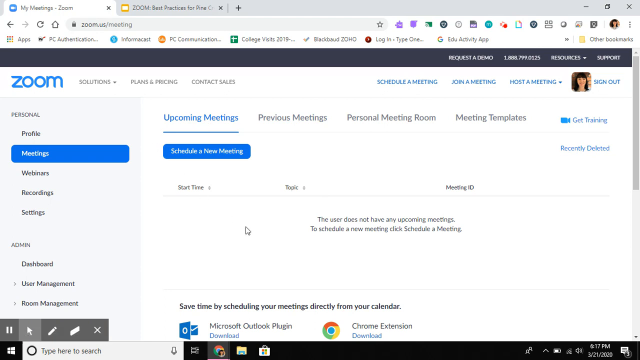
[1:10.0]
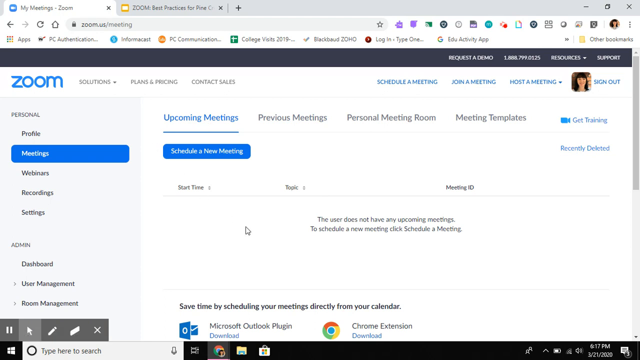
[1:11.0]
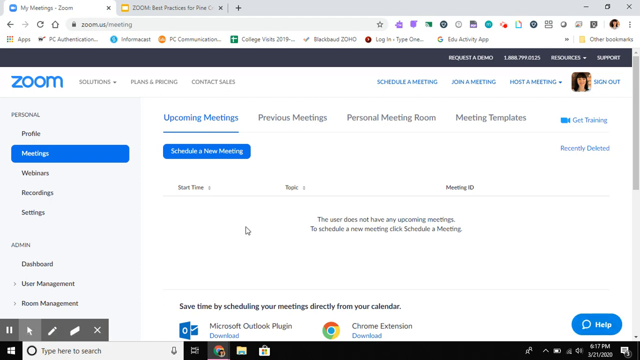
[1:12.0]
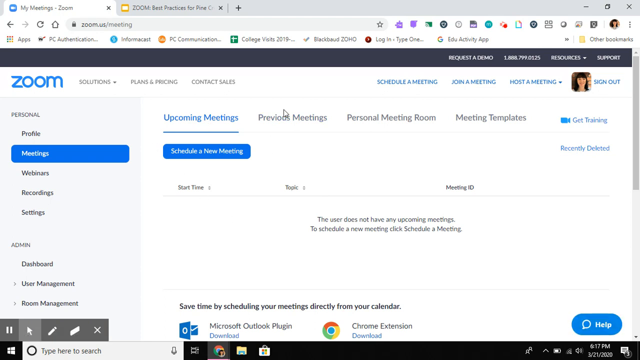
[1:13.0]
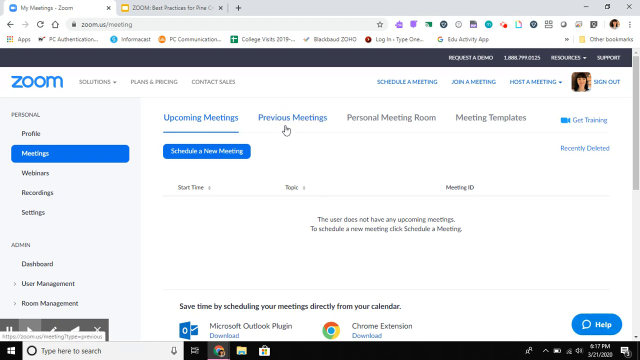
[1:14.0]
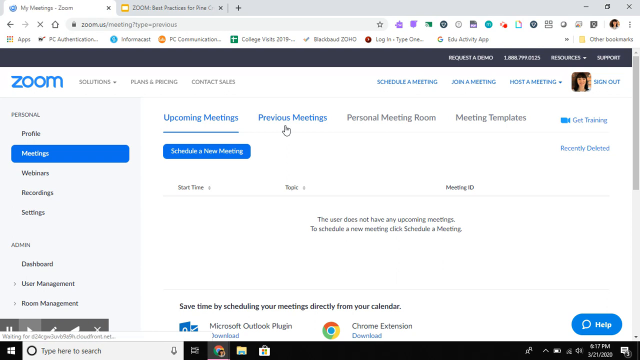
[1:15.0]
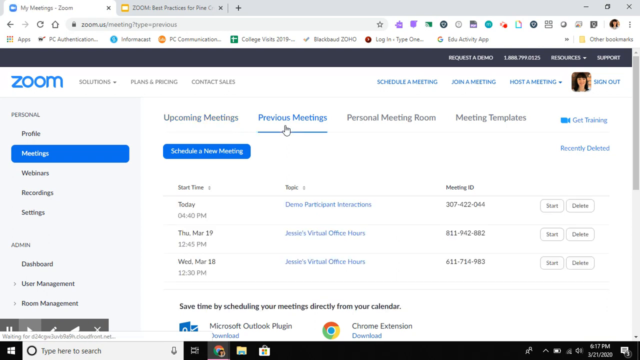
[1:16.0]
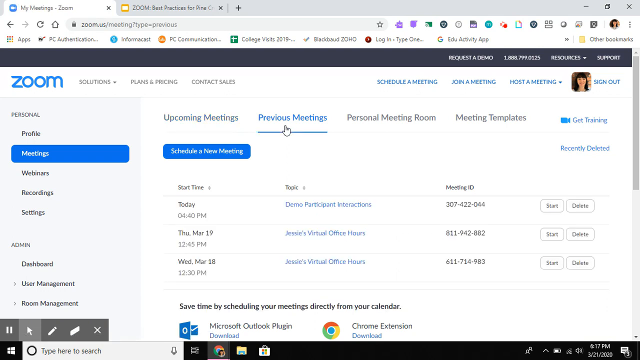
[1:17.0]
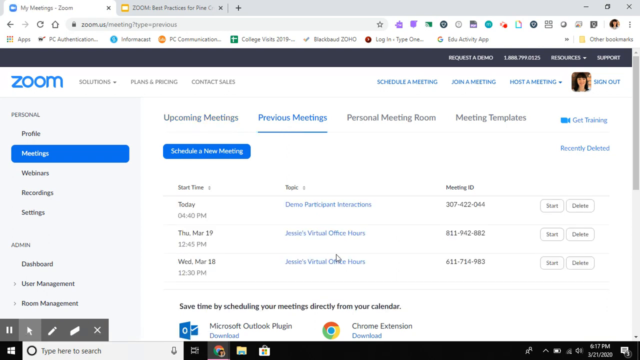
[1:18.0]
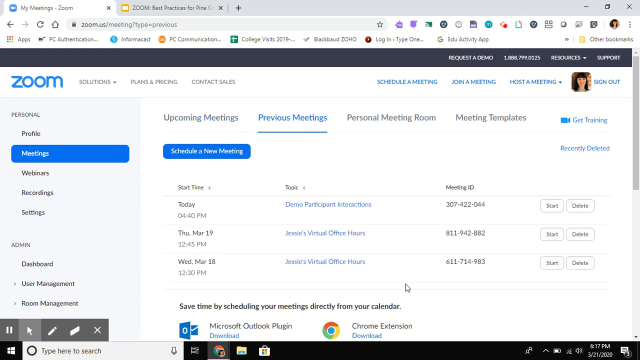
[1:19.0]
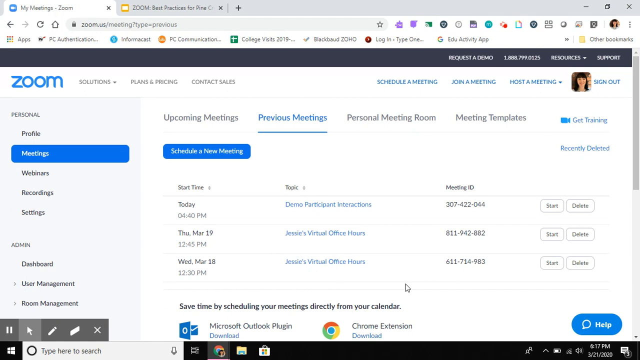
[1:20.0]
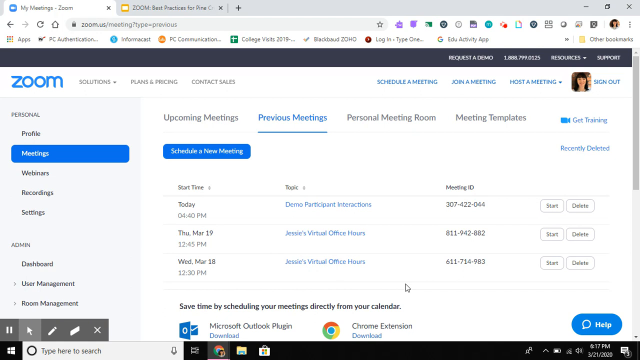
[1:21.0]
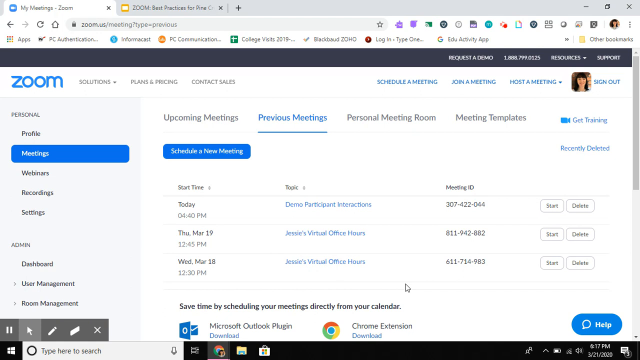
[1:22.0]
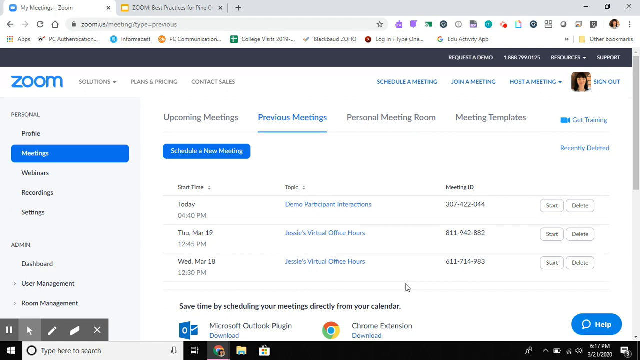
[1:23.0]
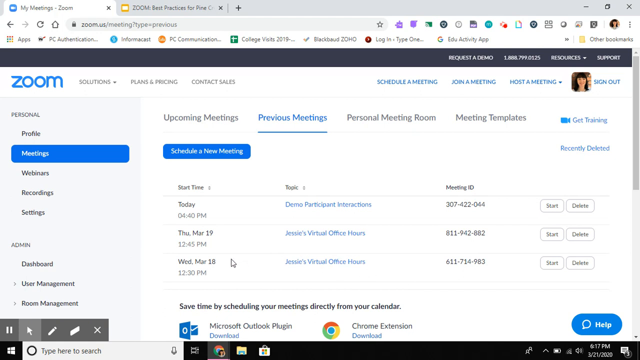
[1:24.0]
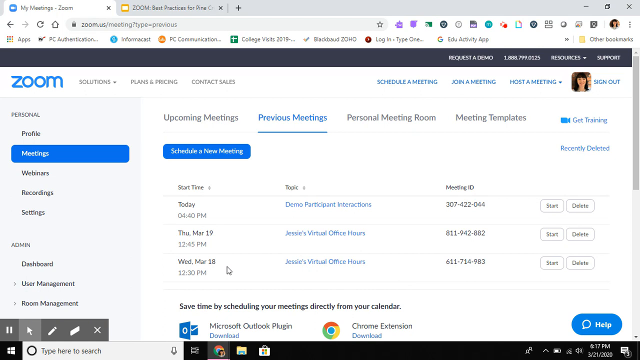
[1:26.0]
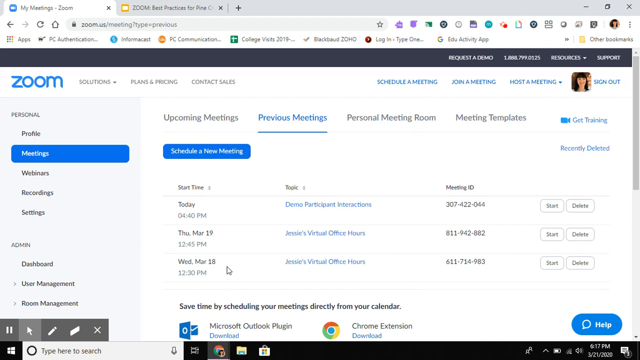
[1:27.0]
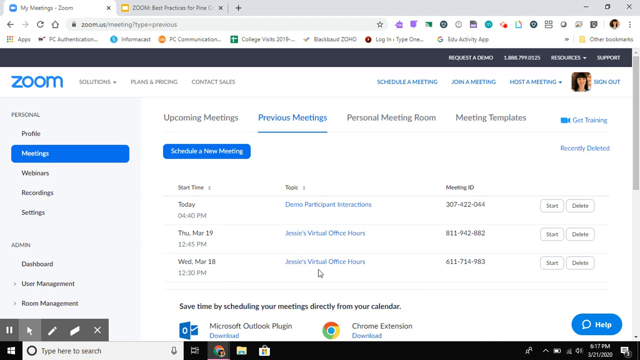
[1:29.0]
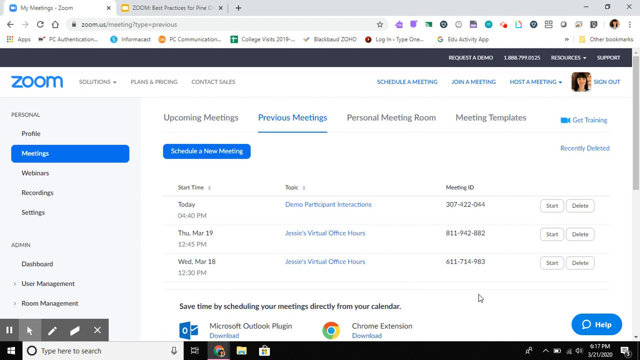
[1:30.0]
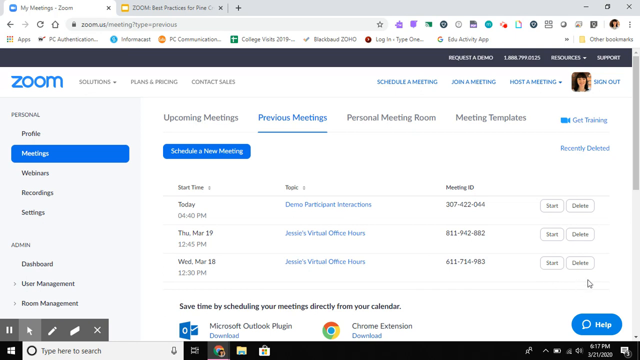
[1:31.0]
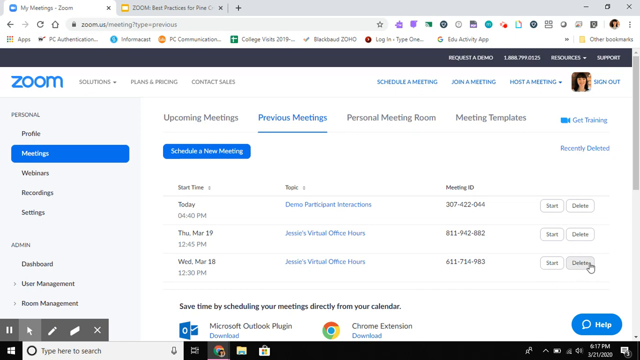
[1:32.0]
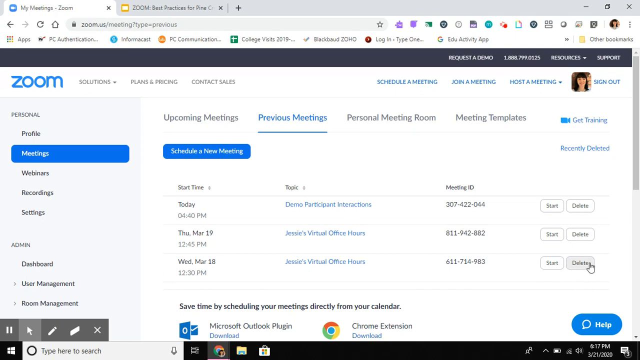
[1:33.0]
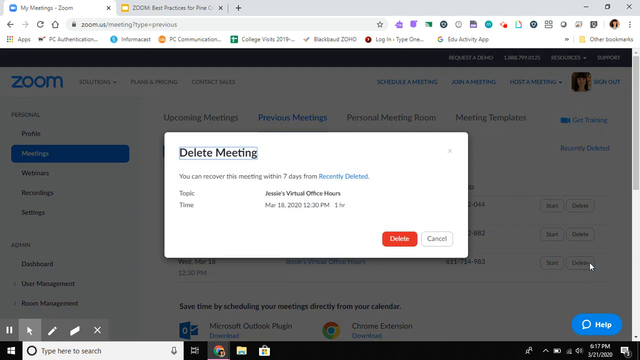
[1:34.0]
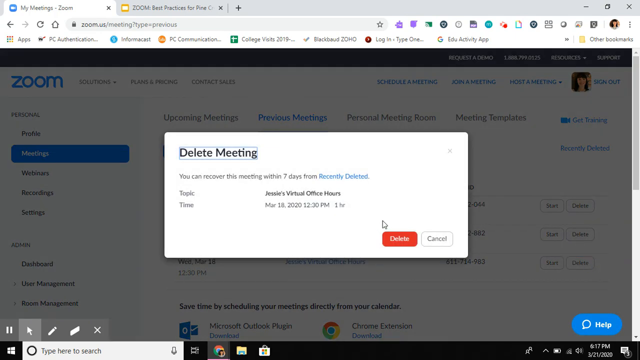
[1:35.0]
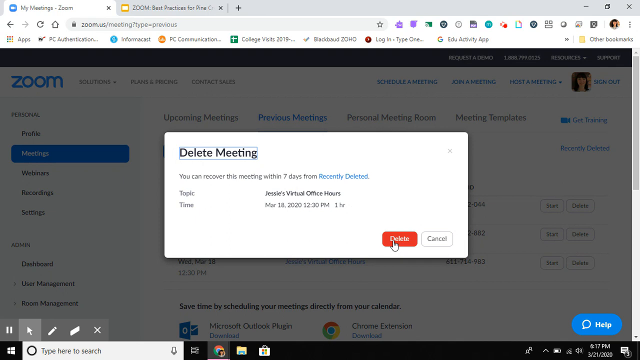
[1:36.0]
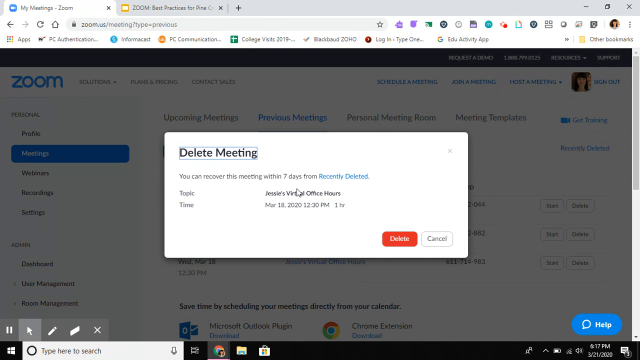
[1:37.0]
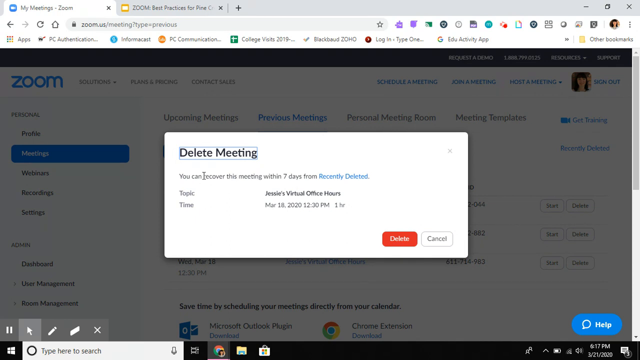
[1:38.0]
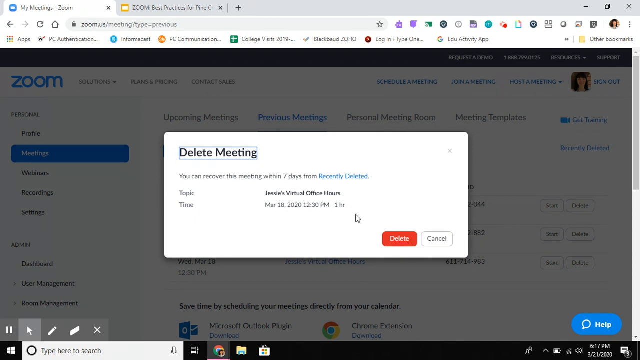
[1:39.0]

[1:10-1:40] The user has clicked the profile icon, opening the profile details. On the left side is "Personal", with "Profiles", "Meetings", "Webinars", "Recordings" and "Settings" under it, and below that "Admin", with "Dashboard", "User Management" and "Room Management". In the middle is the profile: the name is Jessie Metzger, account number 5169630. The profile picture shows her wearing a white t-shirt, with black hair and a brick wall behind her. Under the picture are two buttons, change and delete. Below is the Personal Meeting ID, 8206384868, followed by a link and a prompt that says "use this ID for instant meetings". Under this are a personal link and a sign-in email, with the person's email displayed. The mouse cursor clicks on the profile page at the top right, then moves to the left side and clicks "Meetings", which shows the options "Upcoming Meeting", "Previous Meetings", "Personal Meeting Room" and "Meeting Template". The user clicks "Previous Meetings", which lists the start time, topic and meeting ID of previous meetings, with a start button and a delete button on the right side. The user deletes a meeting, and a prompt says "delete meeting. You can recover these meetings within seven days."